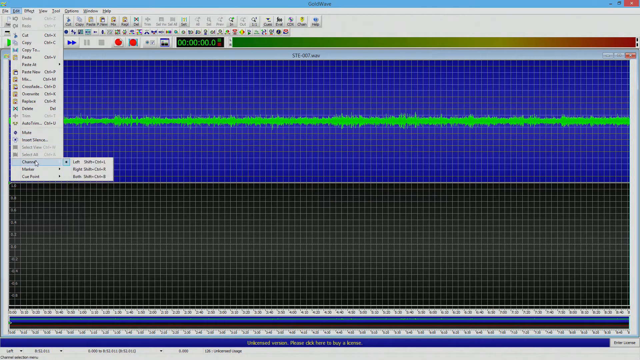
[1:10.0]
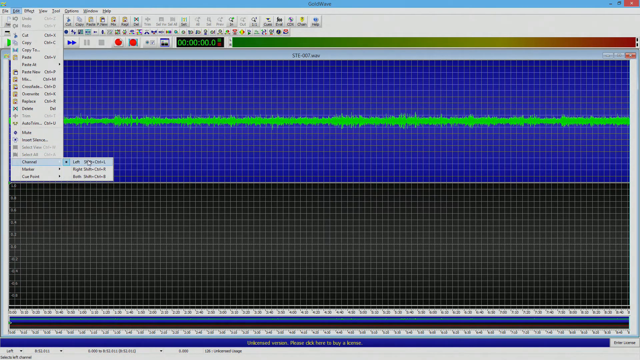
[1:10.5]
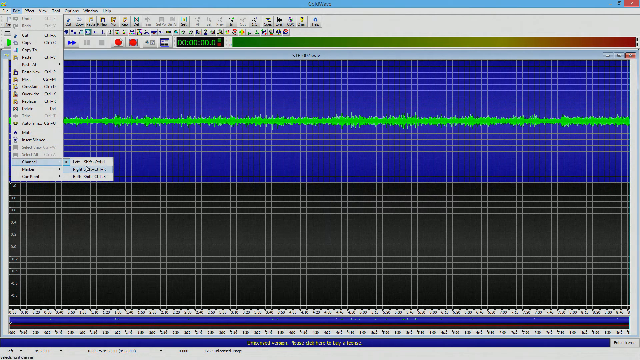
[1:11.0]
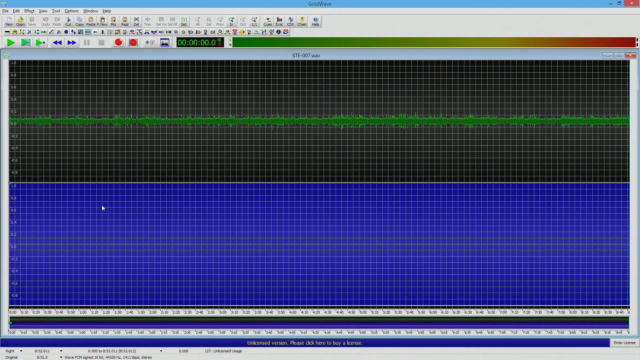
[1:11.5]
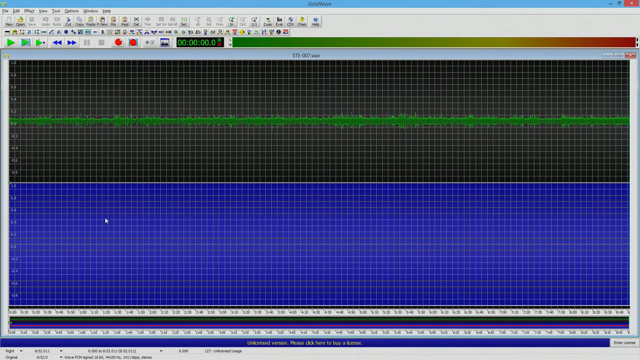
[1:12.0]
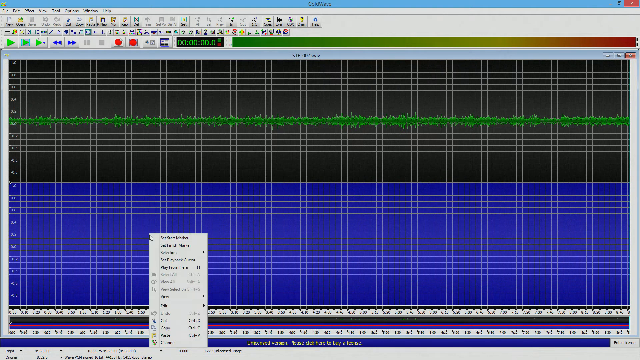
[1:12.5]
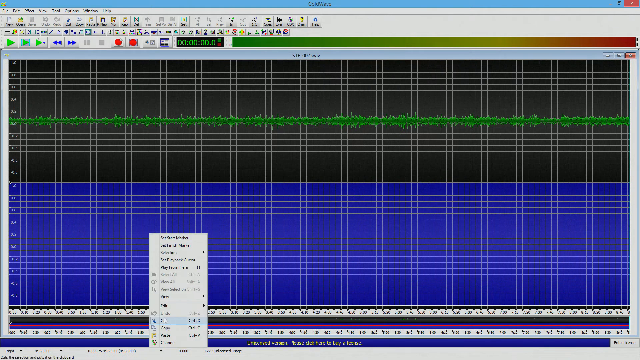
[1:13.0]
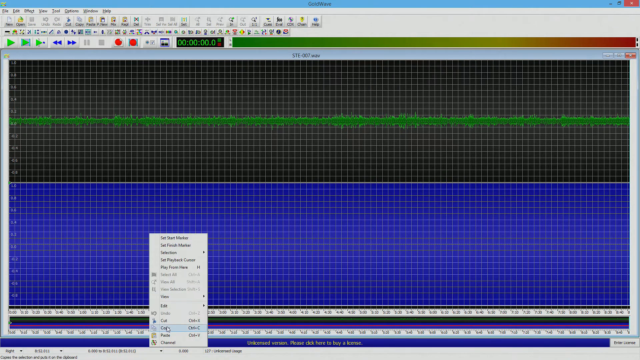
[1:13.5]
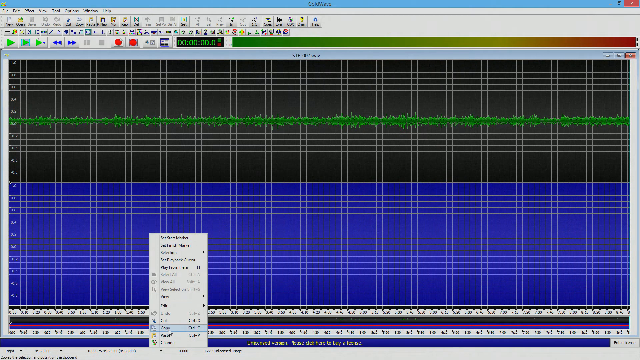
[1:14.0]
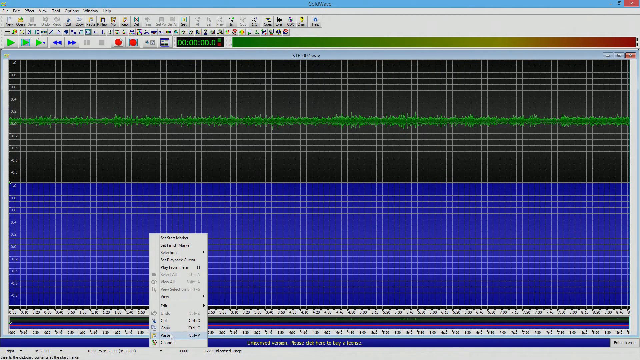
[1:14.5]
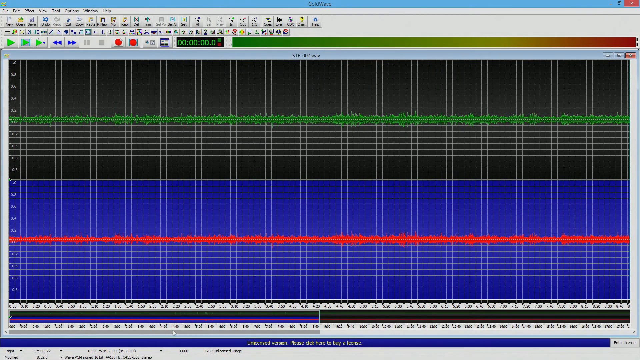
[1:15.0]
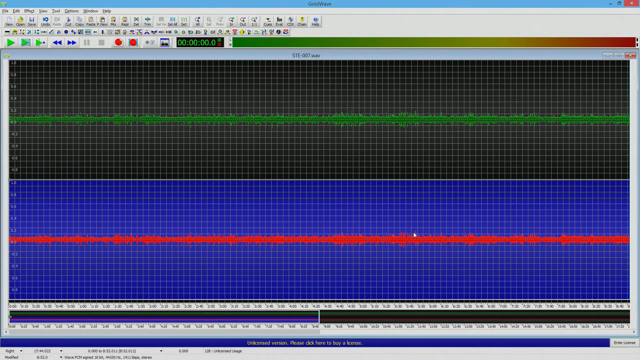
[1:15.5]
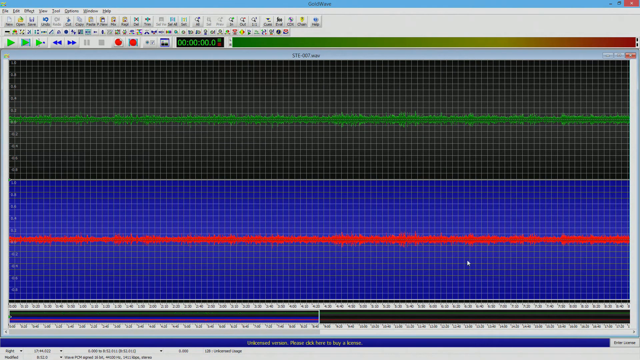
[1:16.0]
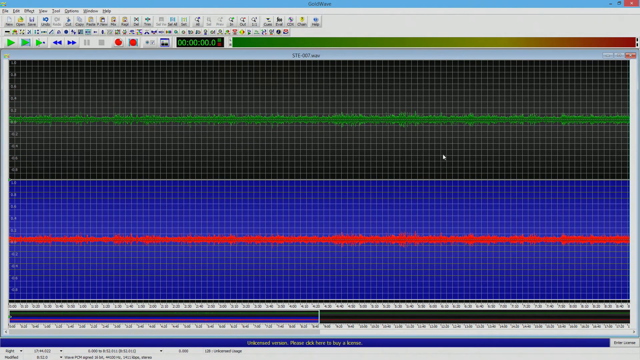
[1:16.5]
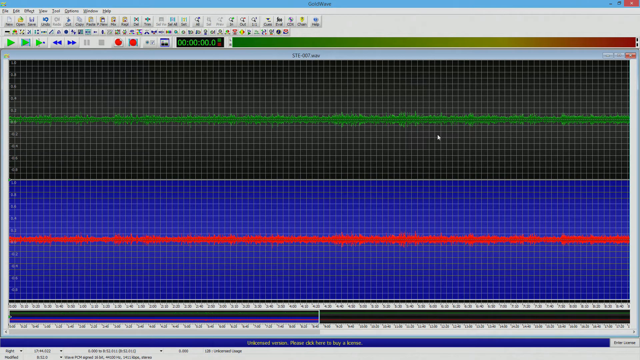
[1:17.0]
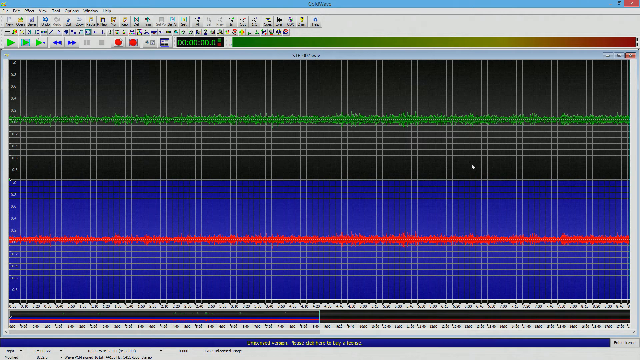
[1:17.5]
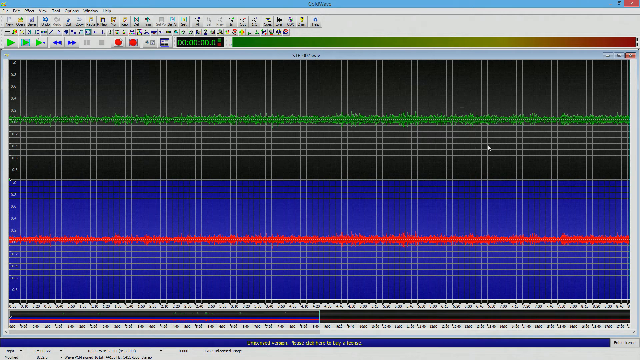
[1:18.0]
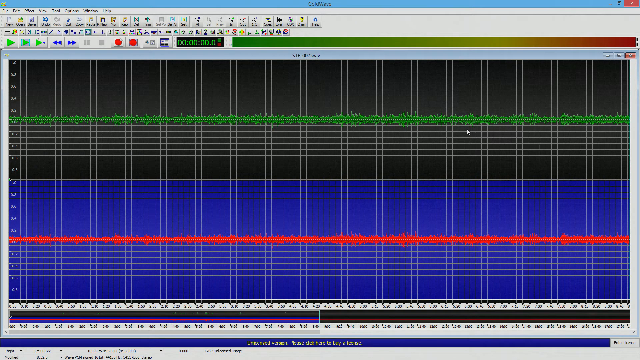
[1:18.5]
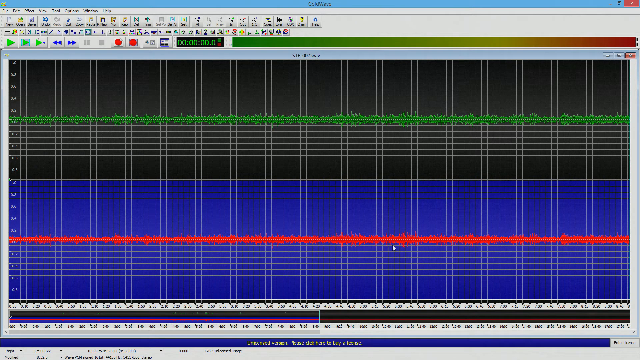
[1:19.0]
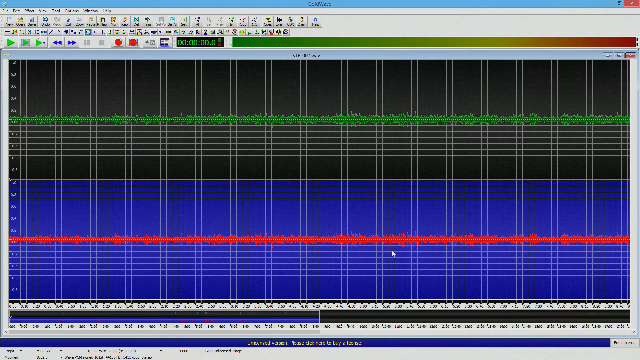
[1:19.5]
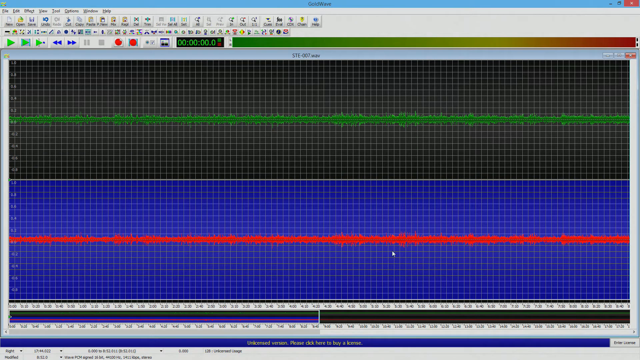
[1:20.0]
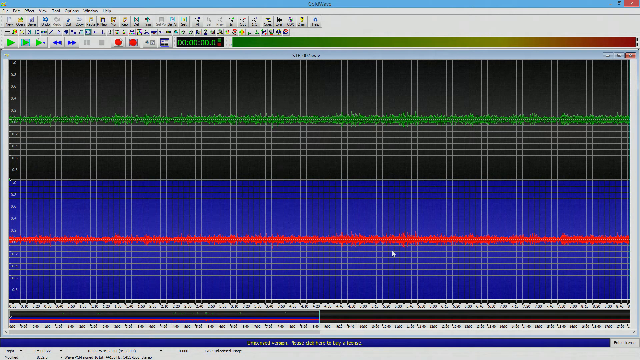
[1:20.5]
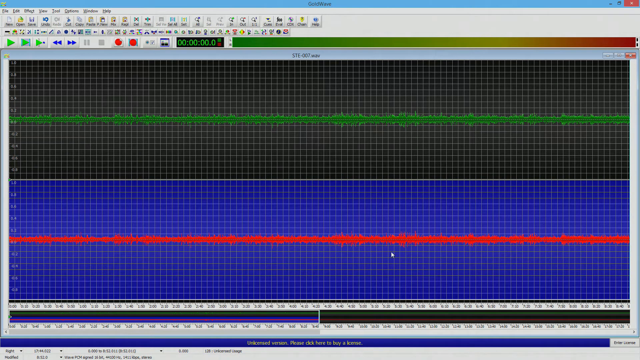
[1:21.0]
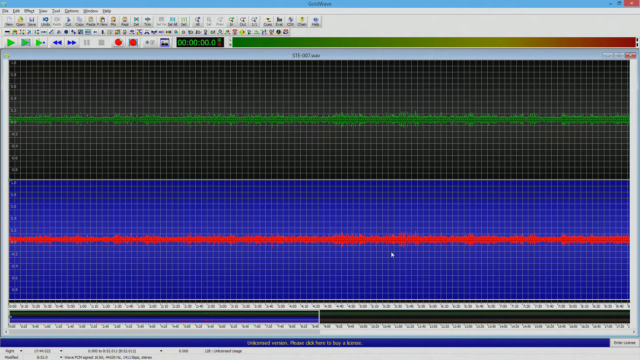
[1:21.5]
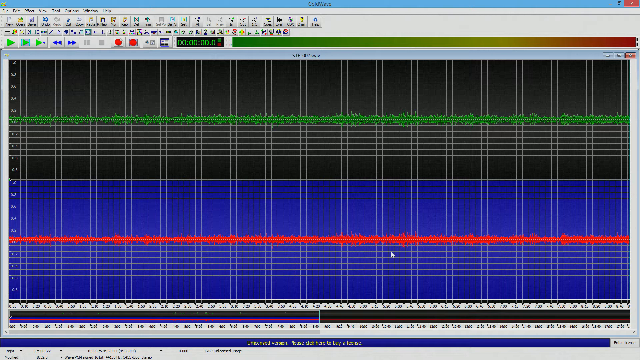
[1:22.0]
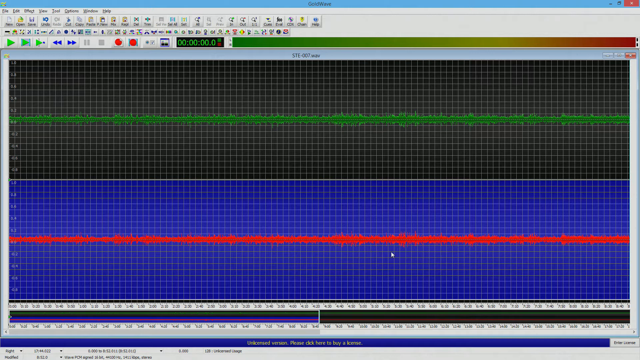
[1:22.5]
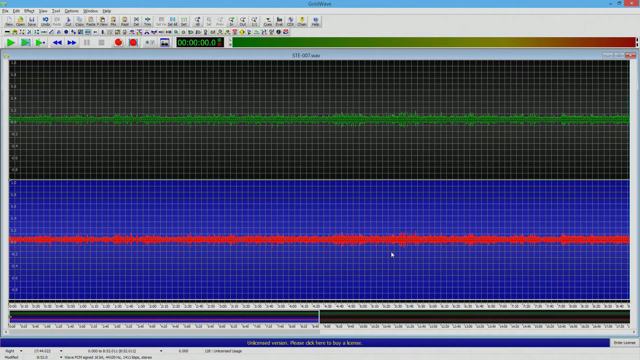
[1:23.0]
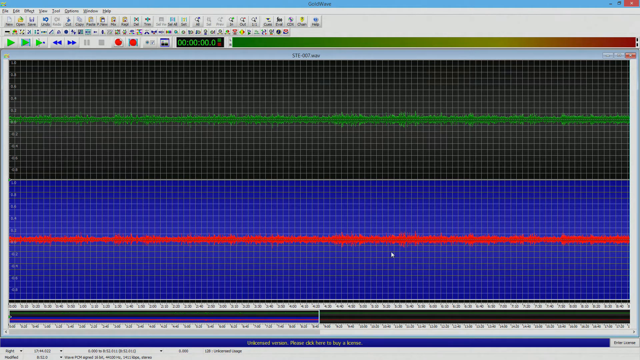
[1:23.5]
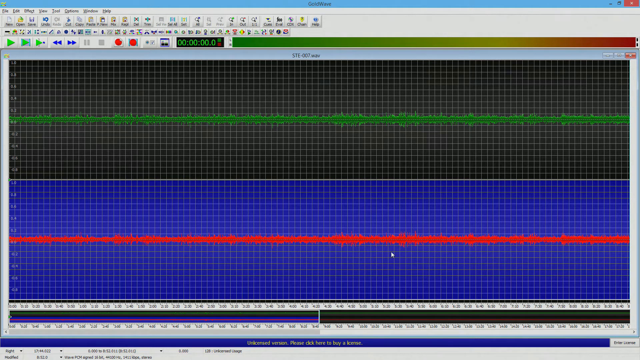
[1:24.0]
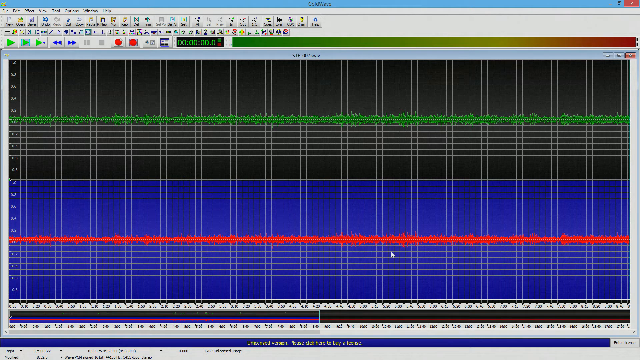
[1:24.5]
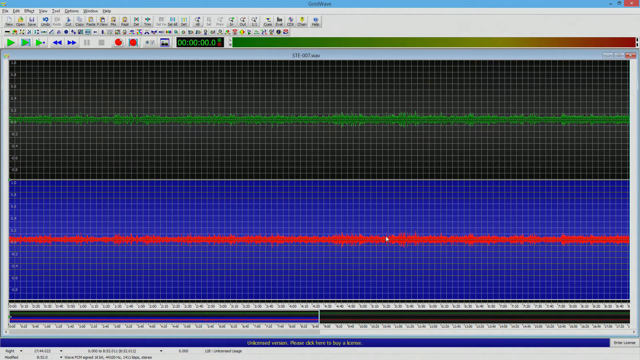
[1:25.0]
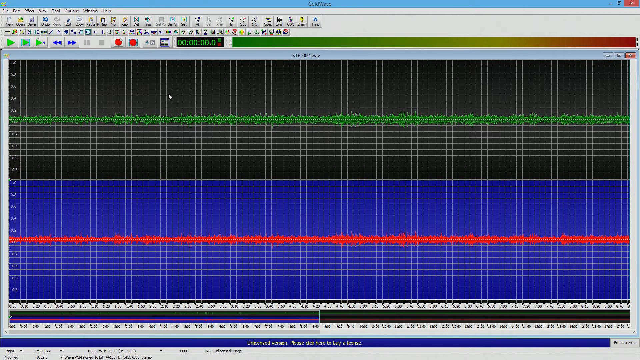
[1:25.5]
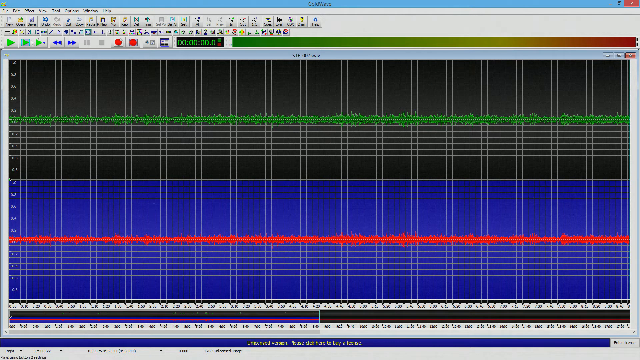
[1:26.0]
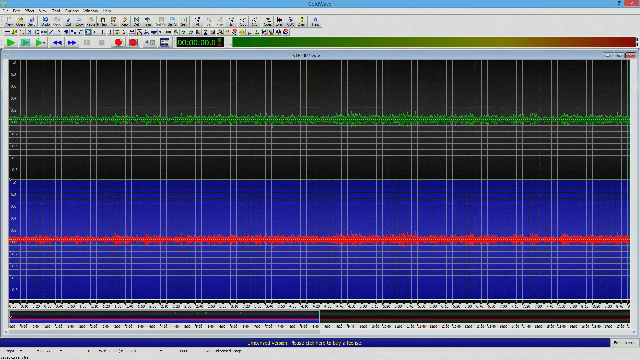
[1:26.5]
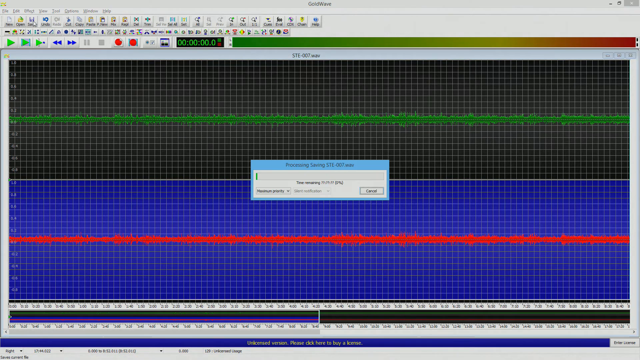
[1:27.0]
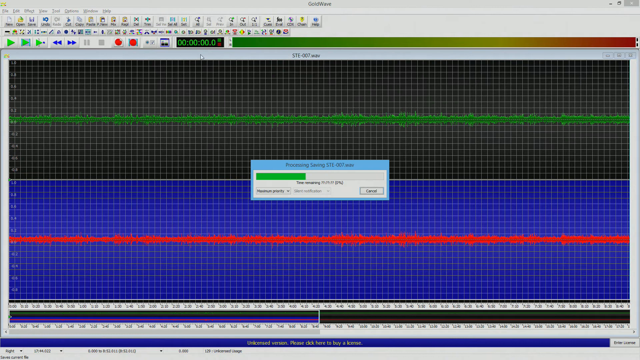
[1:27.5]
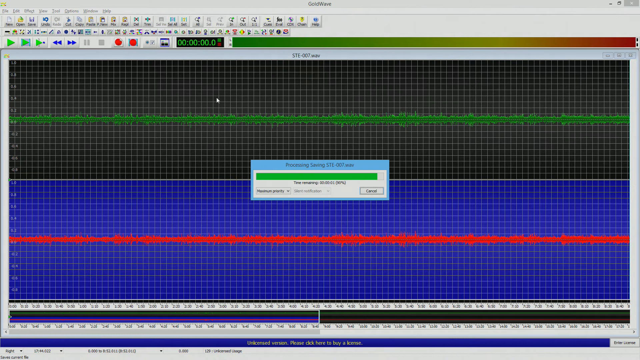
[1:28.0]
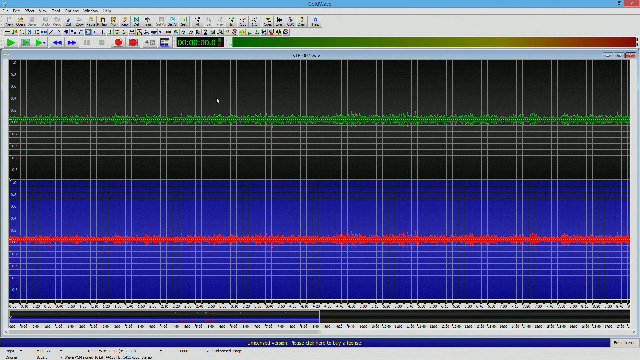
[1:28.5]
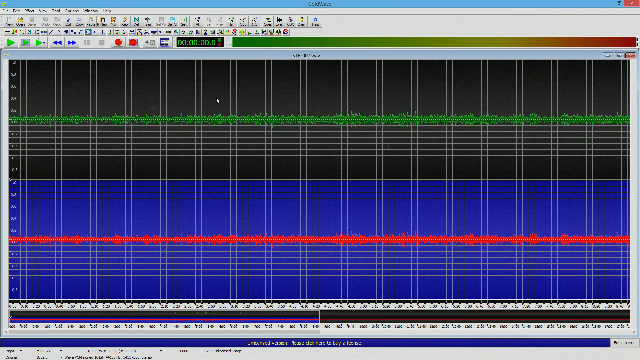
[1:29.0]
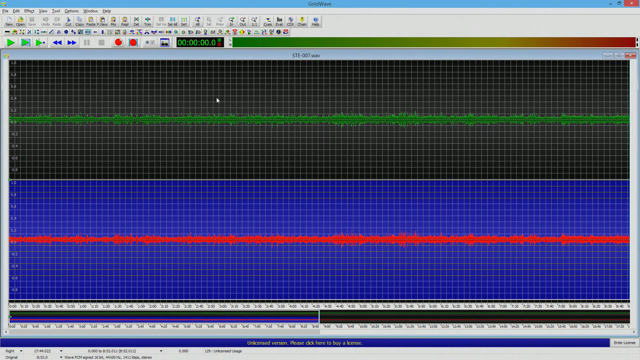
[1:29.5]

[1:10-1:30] On a computer screen, the top portion has a gray background and the bottom portion a bluish purple one. A lime green line runs horizontally in the upper portion and a bright red line runs horizontally in the lower portion. A cursor is moved around the entire screen. A pop-up appears in the upper right-hand corner, with a little one next to it. At the bottom of the screen, two horizontal white bars with numbers run the length of the screen. The cursor moves all around; it is at the red line, then jumps to the green. A pop-up appears with a green bar that fills in very quickly and then disappears, and the pop-ups appear on the right-hand side.